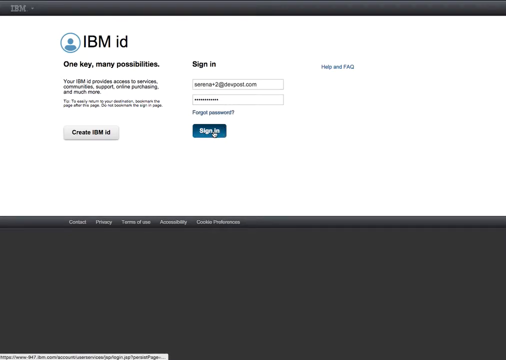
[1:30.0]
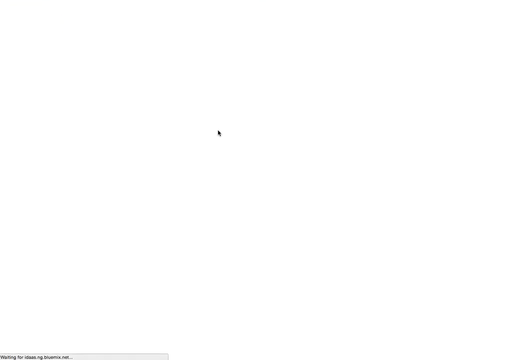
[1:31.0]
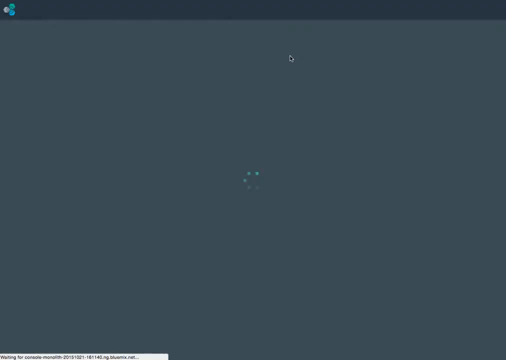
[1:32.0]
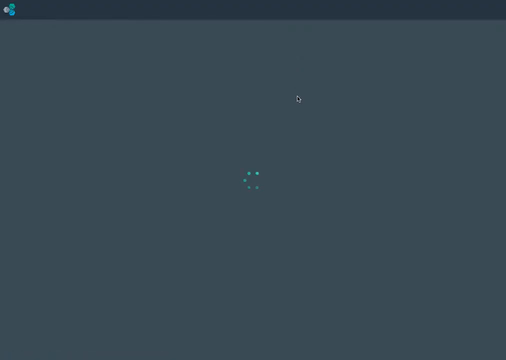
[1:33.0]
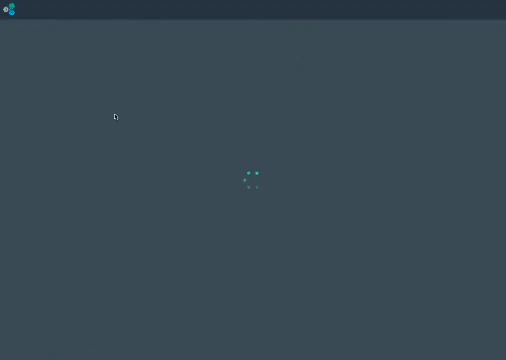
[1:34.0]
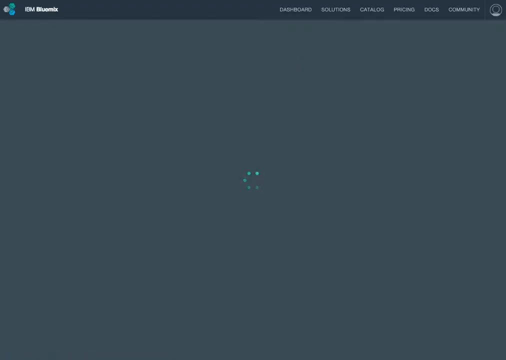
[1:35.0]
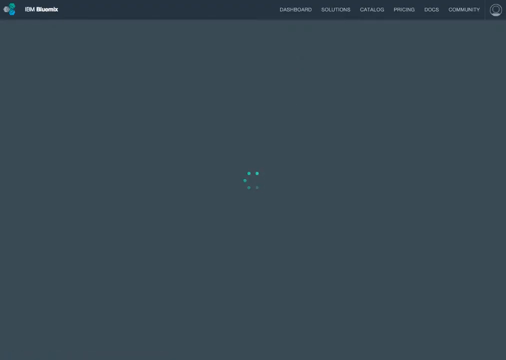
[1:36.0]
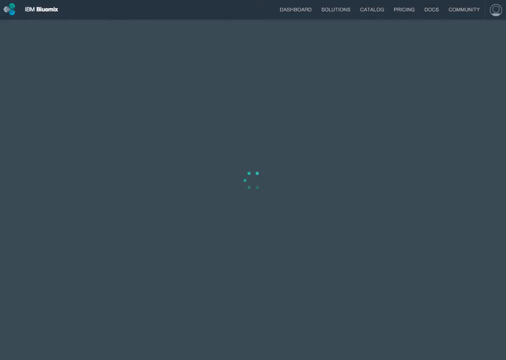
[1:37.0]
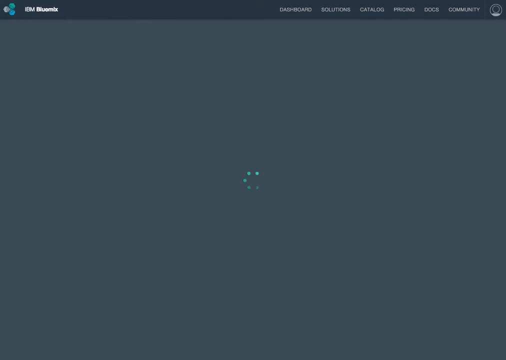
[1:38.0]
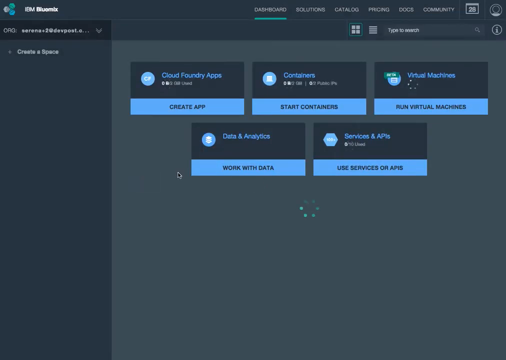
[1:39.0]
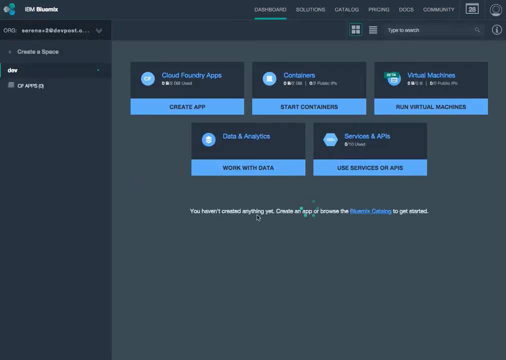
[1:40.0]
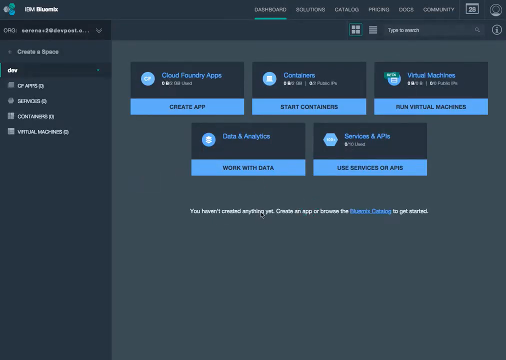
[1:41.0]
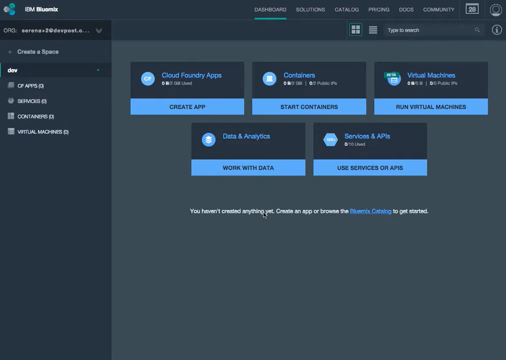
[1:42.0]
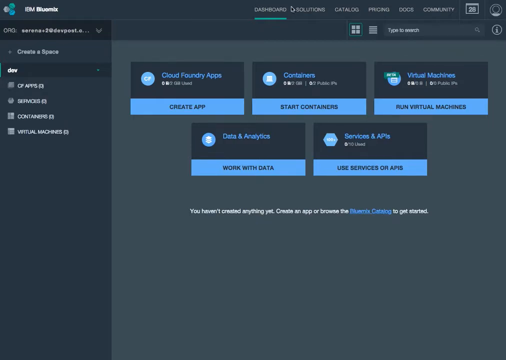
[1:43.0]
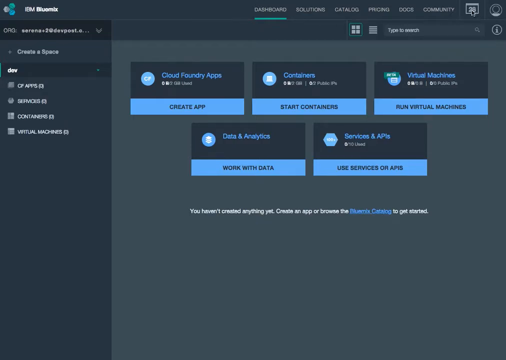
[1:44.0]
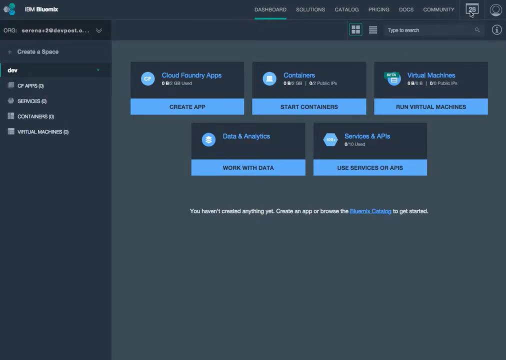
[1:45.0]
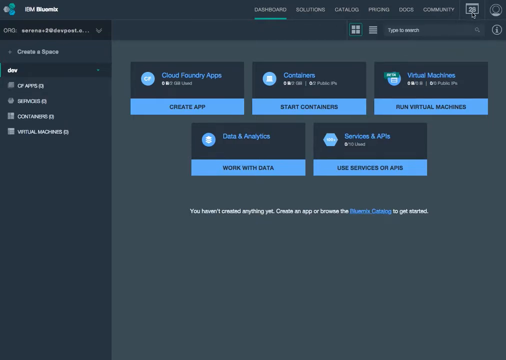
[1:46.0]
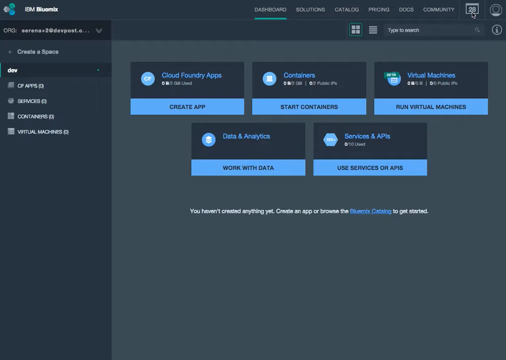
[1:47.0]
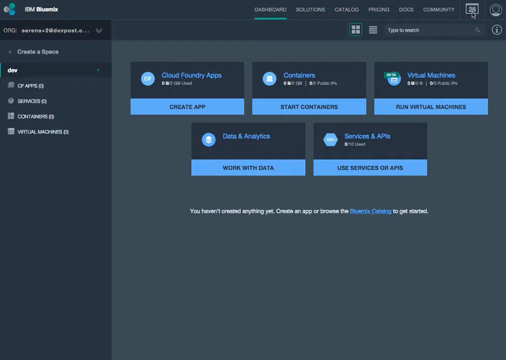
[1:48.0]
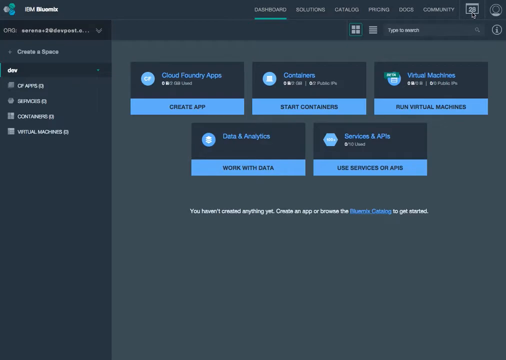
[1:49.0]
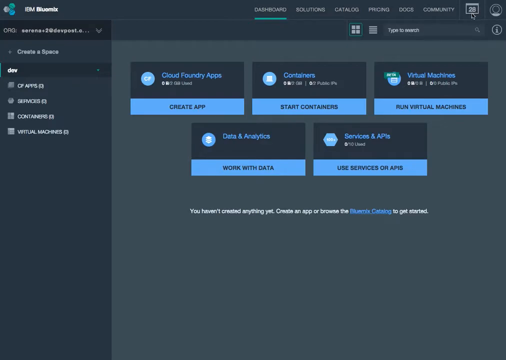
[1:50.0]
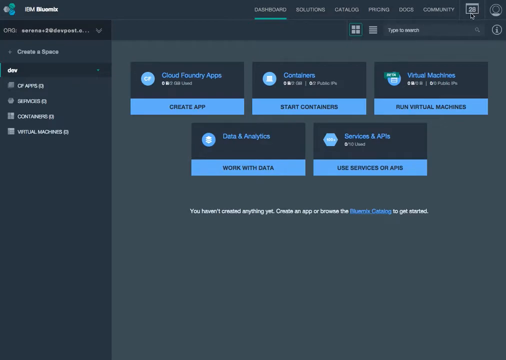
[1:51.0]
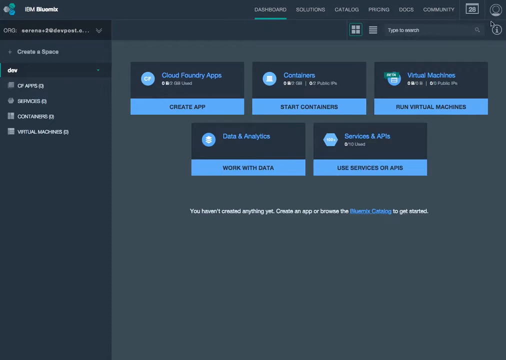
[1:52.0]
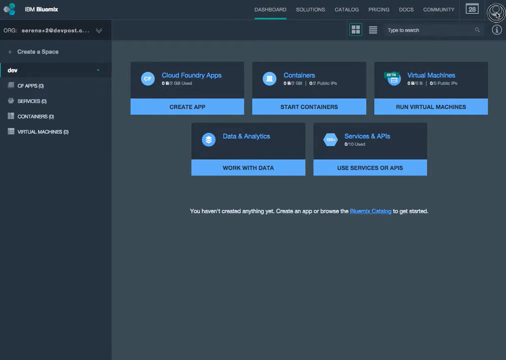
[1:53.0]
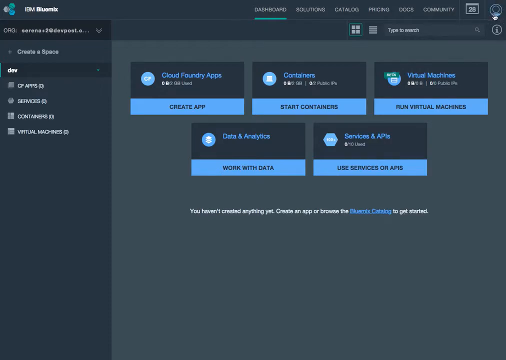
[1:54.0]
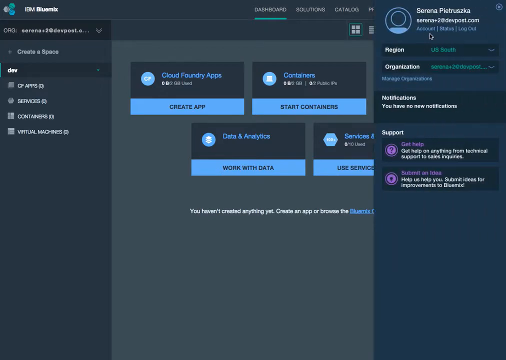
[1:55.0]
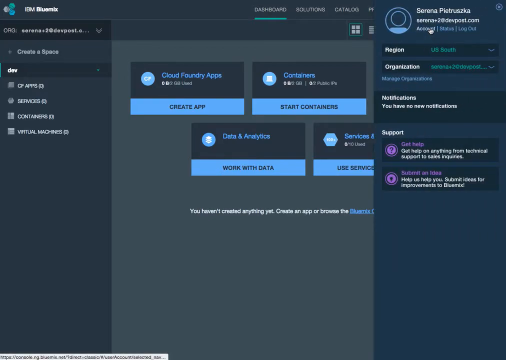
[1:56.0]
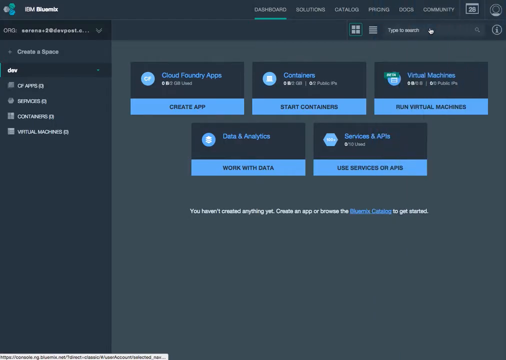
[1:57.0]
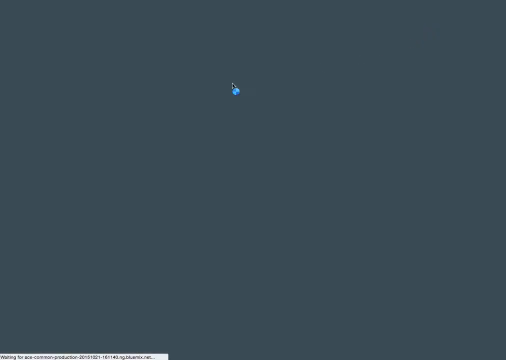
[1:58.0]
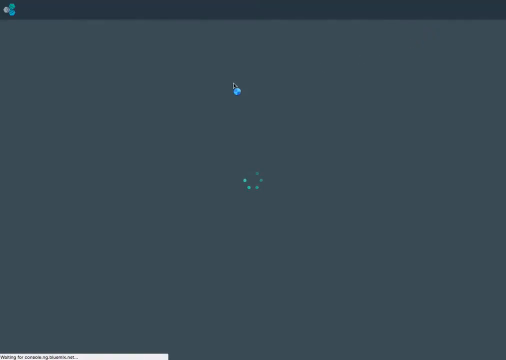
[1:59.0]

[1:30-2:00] A website page has a sign-in button, a sign-in text input field, a sign-in password text input field, and a create IBM ID button. It then looks like it is signing in: the sign-in button is pressed and the page starts loading, shown by a circular symbol in the middle of the screen. While the page loads, a right-justified menu pops up on the upper right with six menu options. The page then loads, showing five boxes on the right side: three on the top row and two on the bottom row.